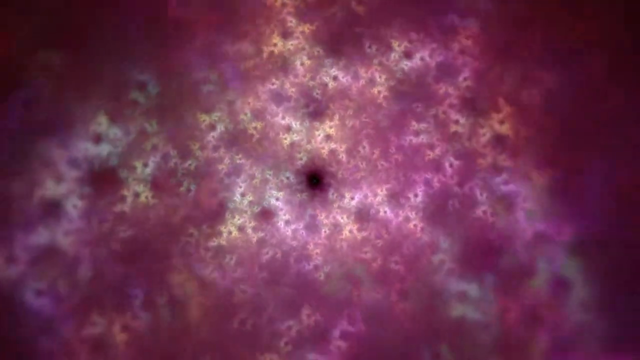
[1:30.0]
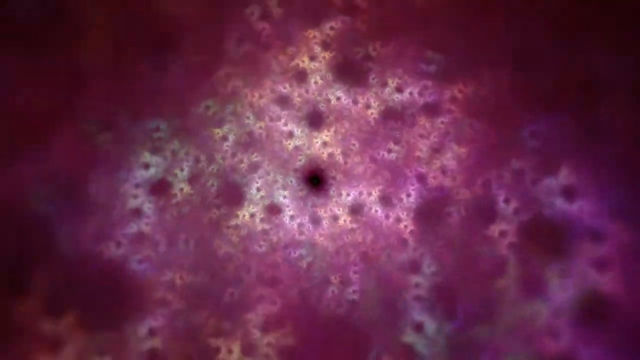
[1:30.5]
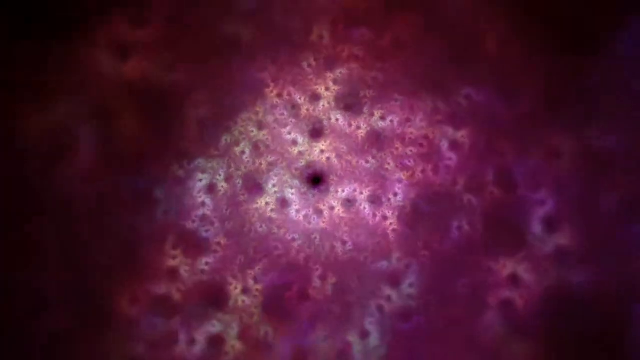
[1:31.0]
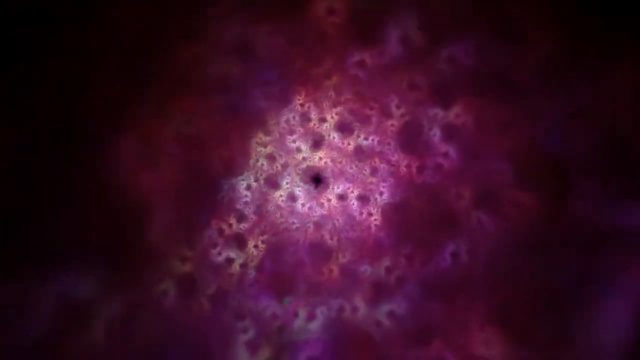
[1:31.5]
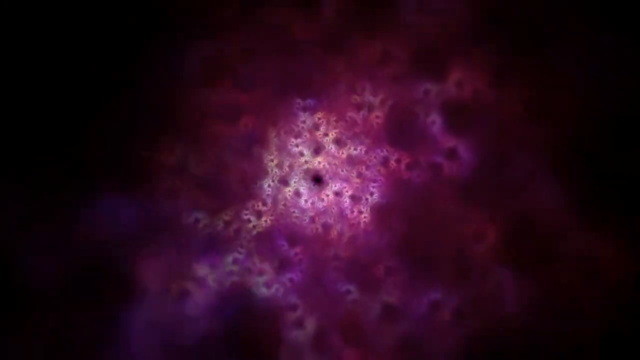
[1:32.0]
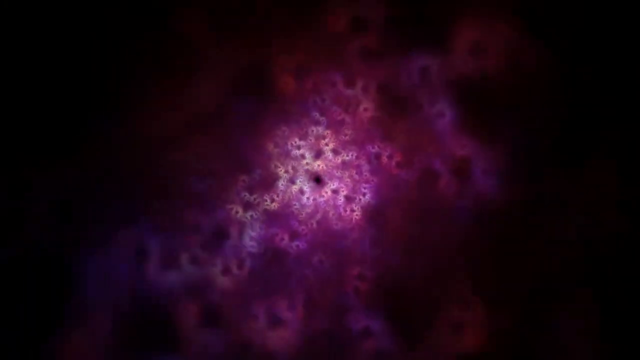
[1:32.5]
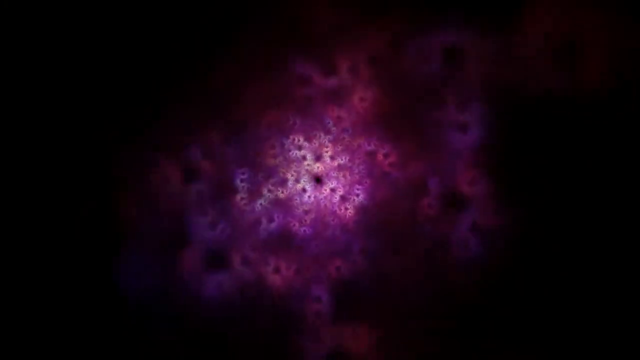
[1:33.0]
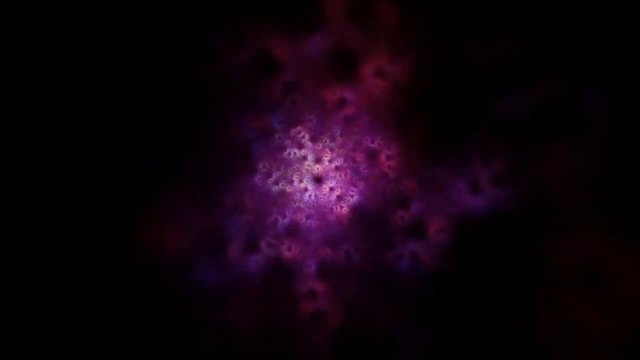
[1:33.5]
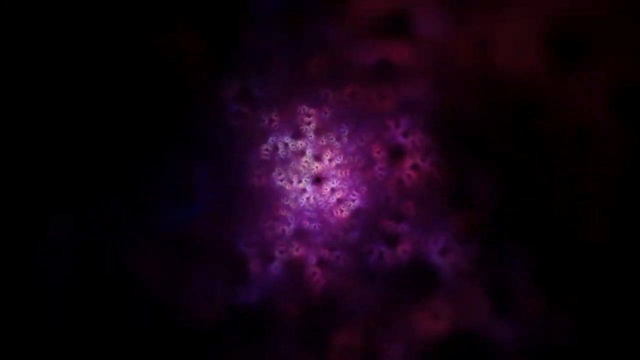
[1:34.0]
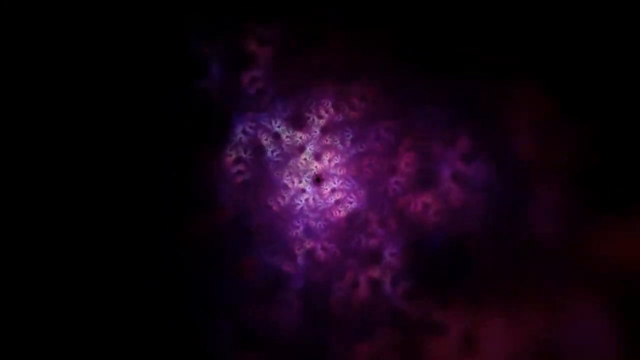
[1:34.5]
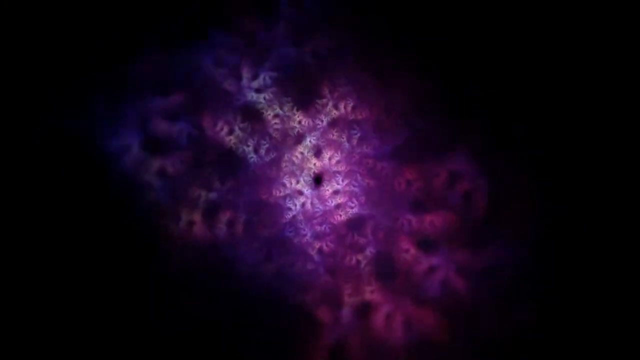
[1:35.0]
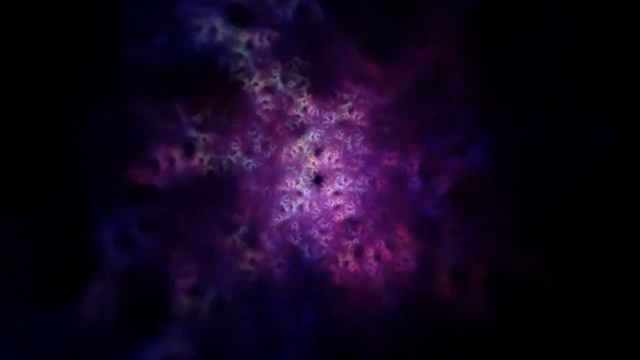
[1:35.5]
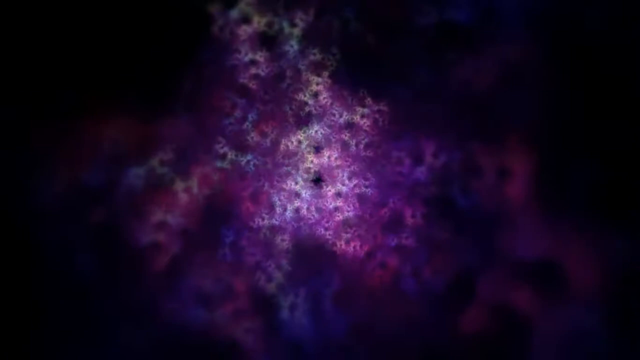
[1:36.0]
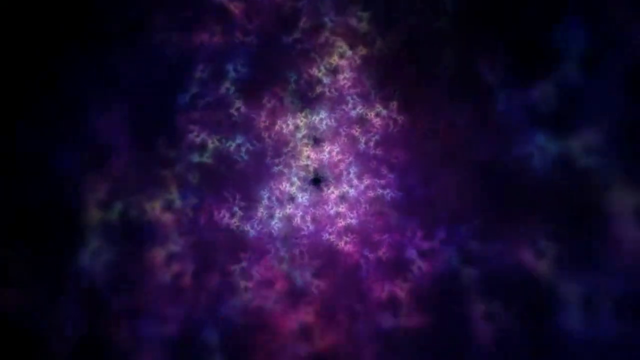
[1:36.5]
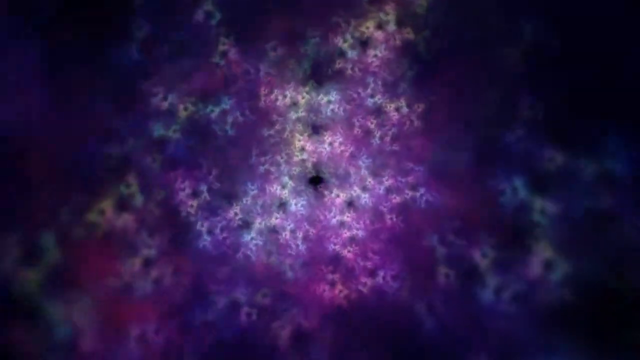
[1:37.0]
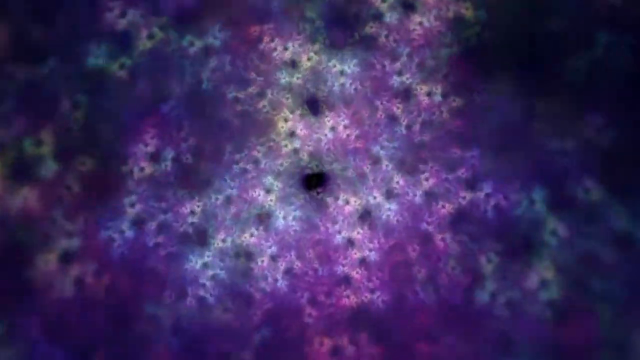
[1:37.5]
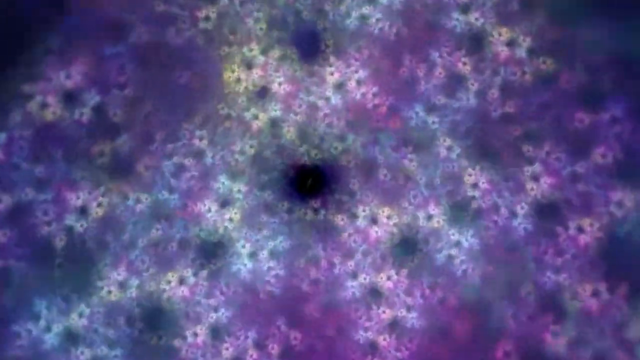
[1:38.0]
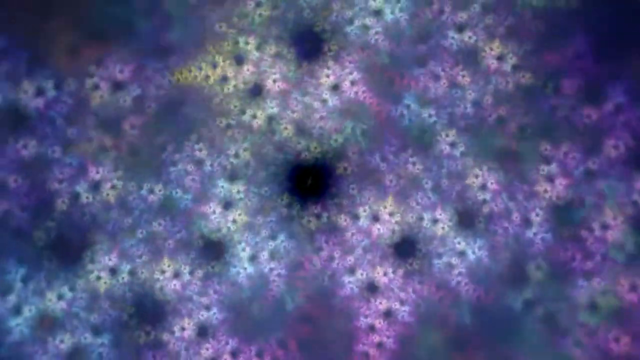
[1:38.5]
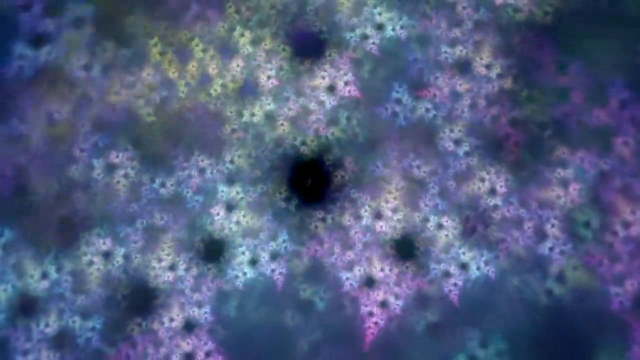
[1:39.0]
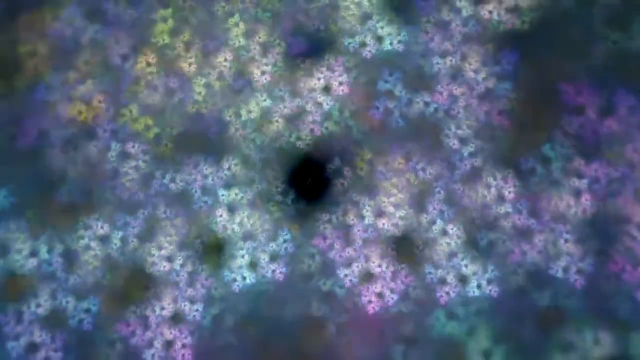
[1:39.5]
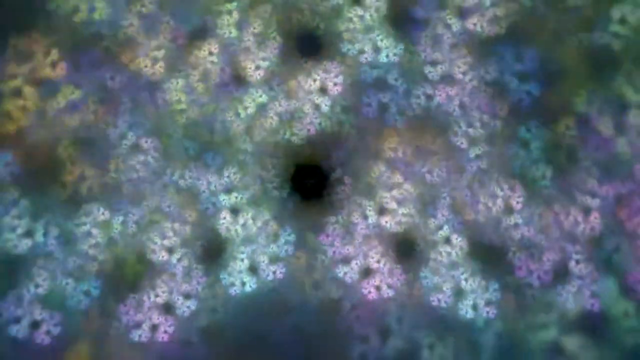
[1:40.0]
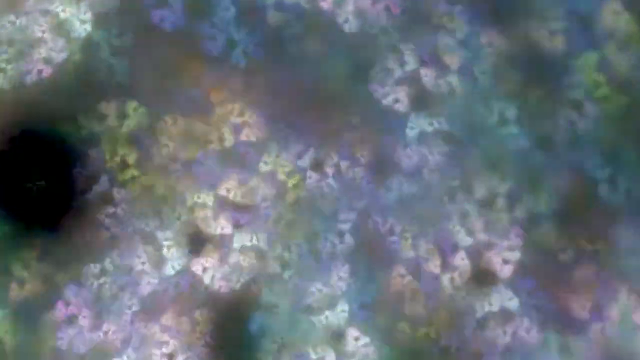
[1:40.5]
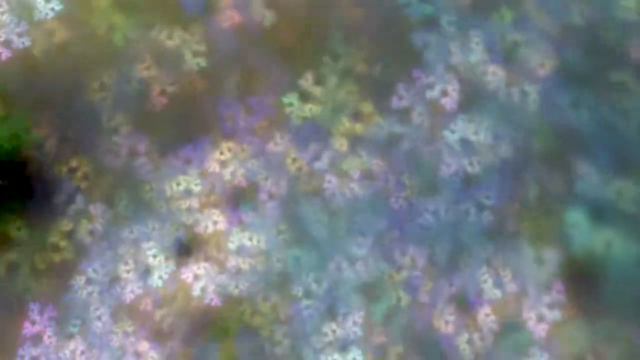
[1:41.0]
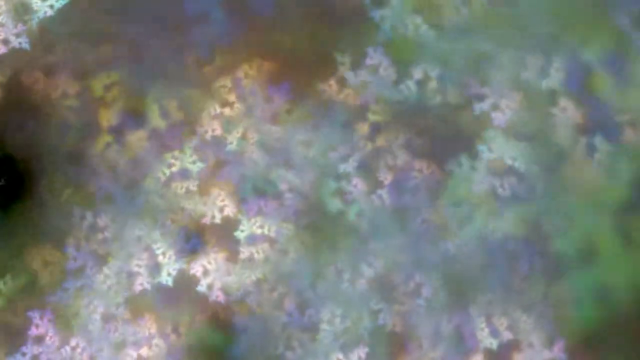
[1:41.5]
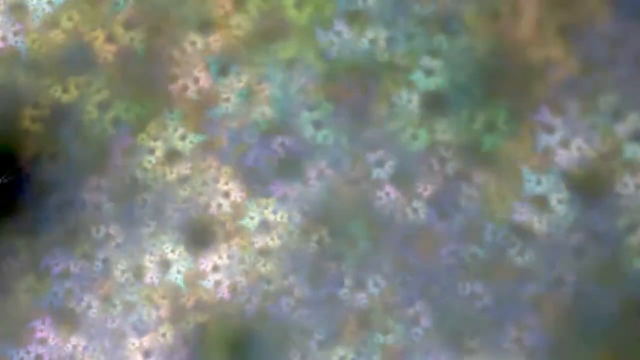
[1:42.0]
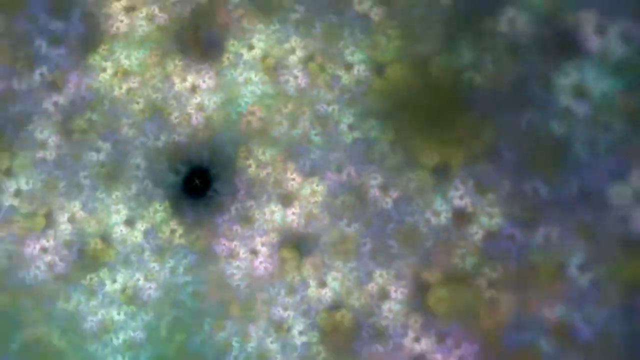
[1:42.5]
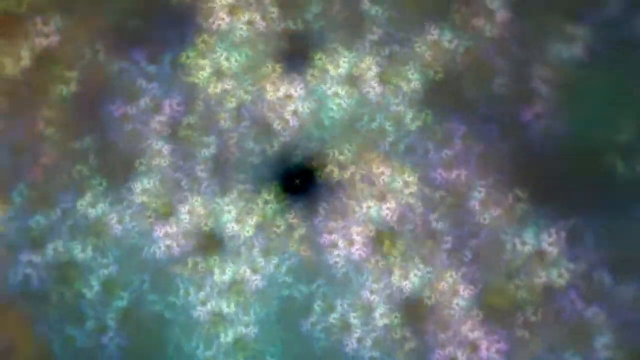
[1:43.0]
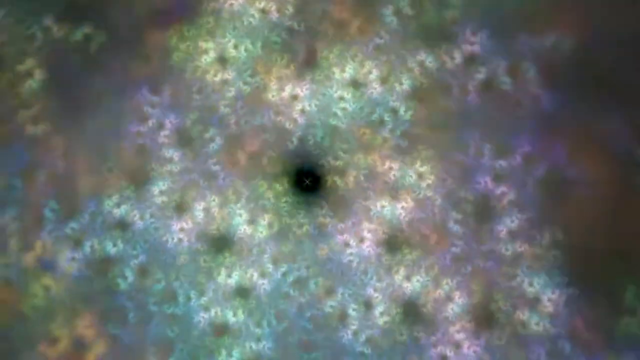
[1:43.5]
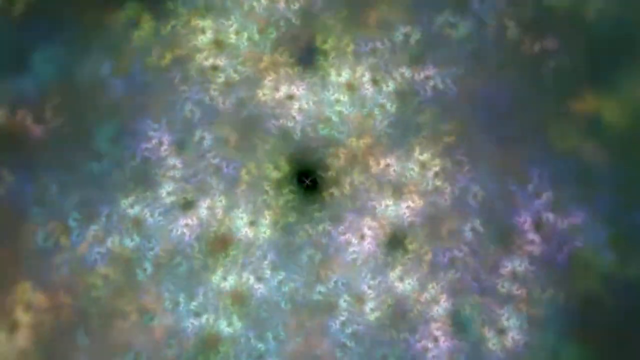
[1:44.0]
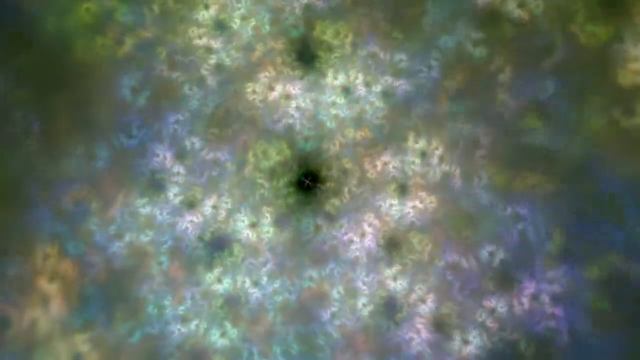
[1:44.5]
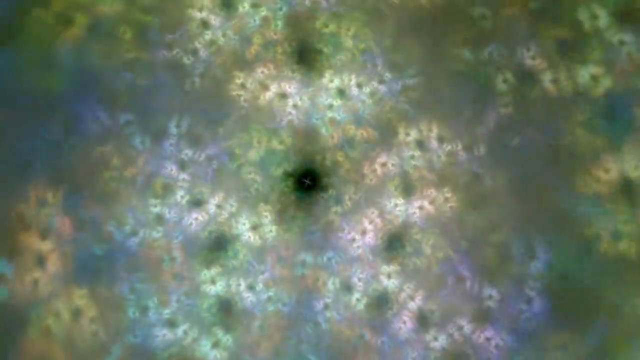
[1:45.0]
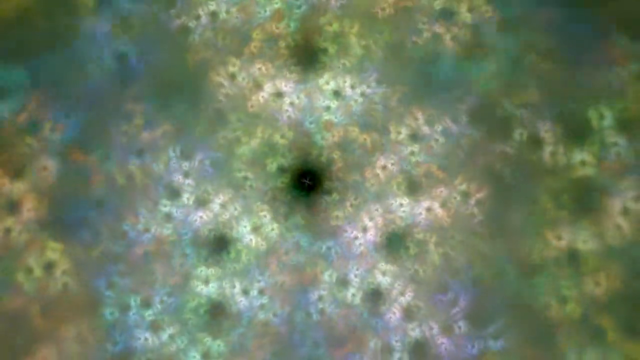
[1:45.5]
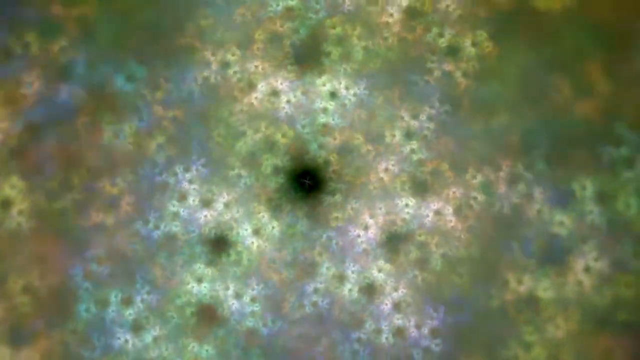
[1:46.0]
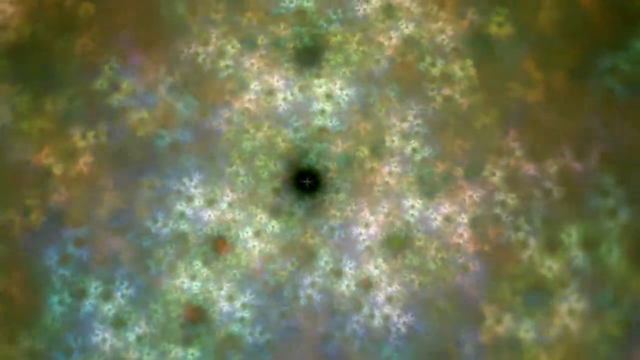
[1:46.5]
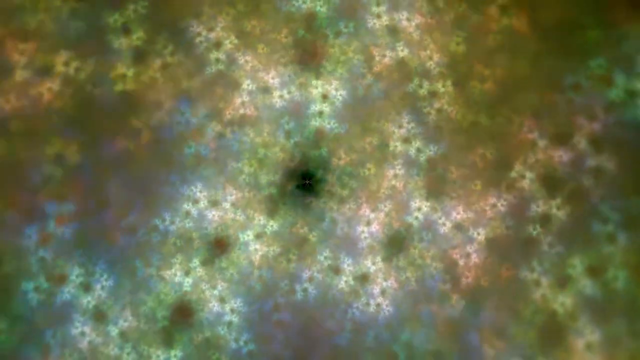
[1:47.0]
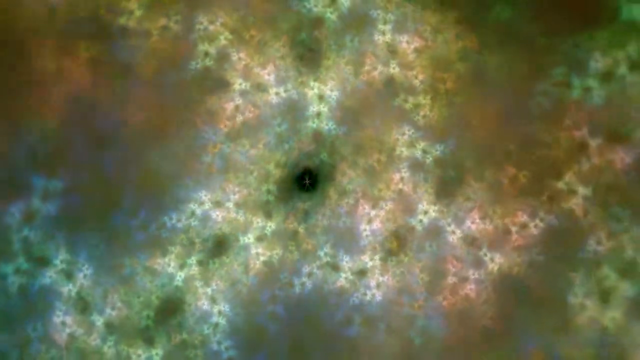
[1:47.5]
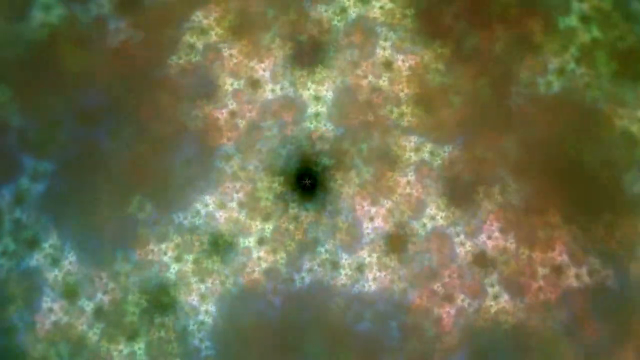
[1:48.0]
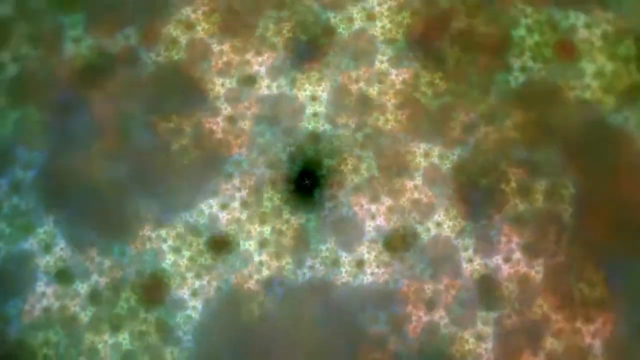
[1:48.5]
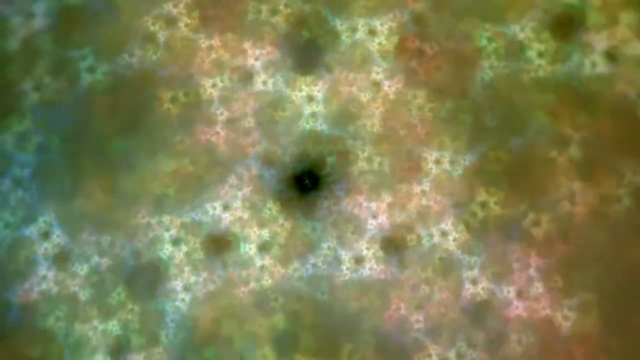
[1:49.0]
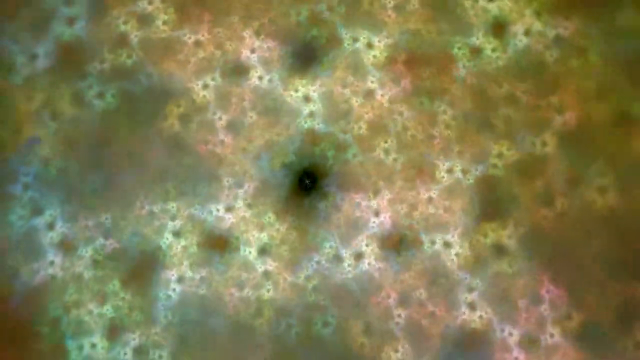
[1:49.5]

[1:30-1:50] A big kaleidoscope image takes over most of the screen. Its center part is kind of like a black hole, all black and dark, kind of the focal point that everything swirls around. The images continue to move as it swirls, in yellows, maroons and possibly bluish greens, with a black background still present. The image then shrinks and gets smaller, so that what used to take over the full screen is centered and concentrated toward the middle, with lots of swirls as it changes into different shapes. It then gets bigger again and takes over the screen, similar to before, except that instead of one black circle there are four black circles, and the colours shift to more yellow, green and blue, with less maroon. It keeps swirling, and yellows and oranges come up stronger in the background. The images become less detailed, showing more colours and fewer shapes as it zooms out, then more detailed shapes return as it zooms back out. The four center points remain: the black one stays in the middle, and the three around it get a little less murky.